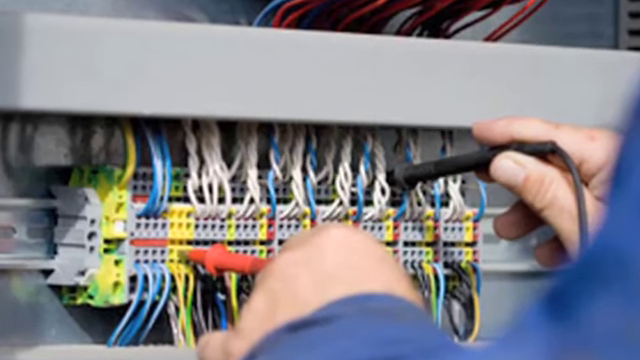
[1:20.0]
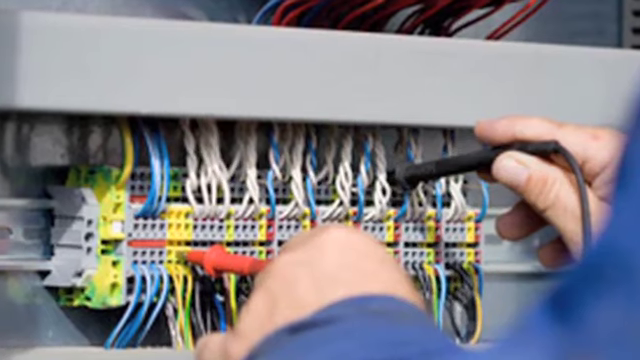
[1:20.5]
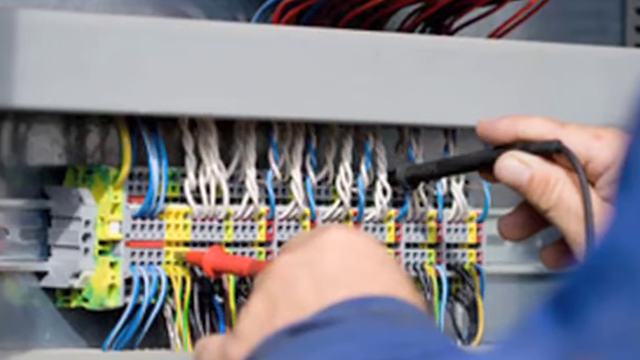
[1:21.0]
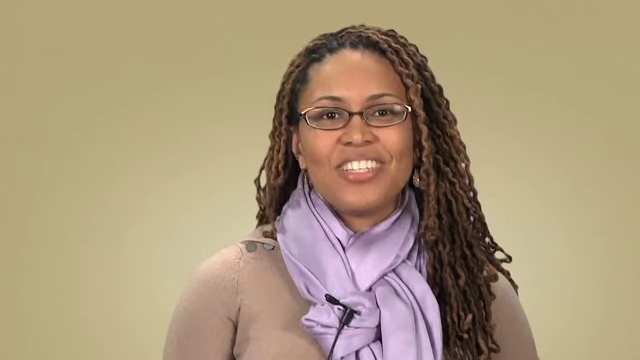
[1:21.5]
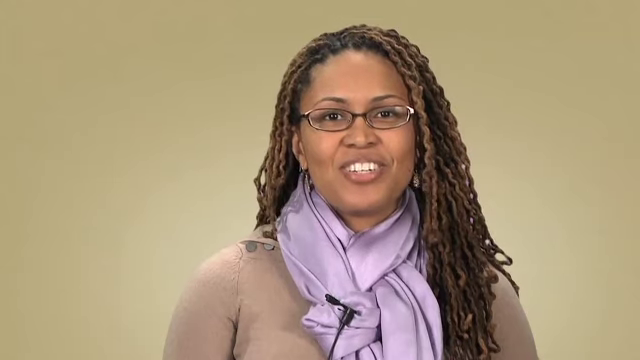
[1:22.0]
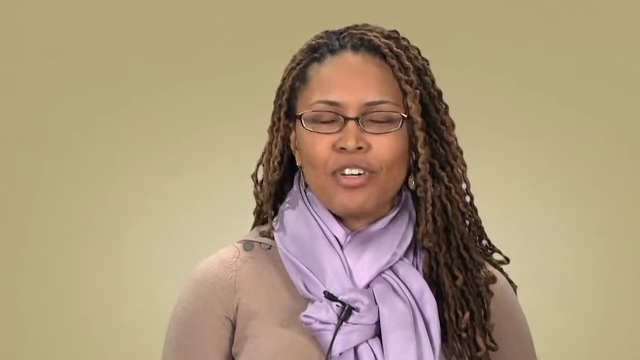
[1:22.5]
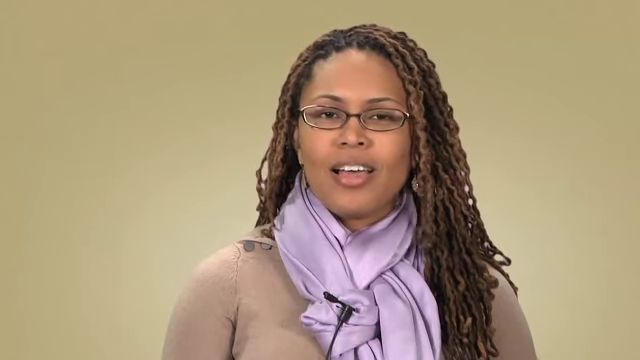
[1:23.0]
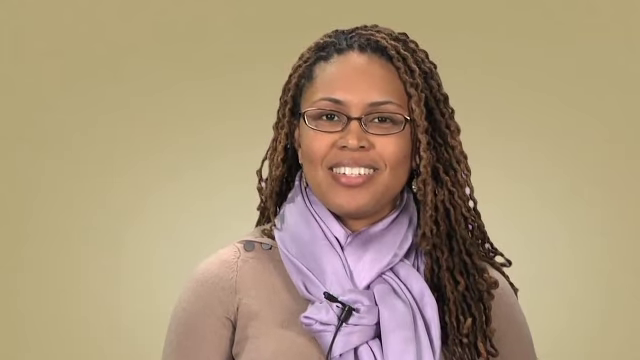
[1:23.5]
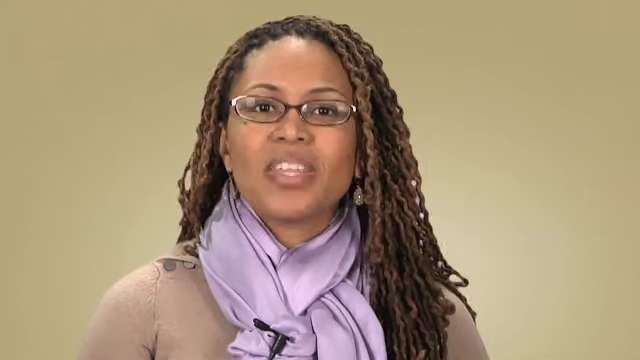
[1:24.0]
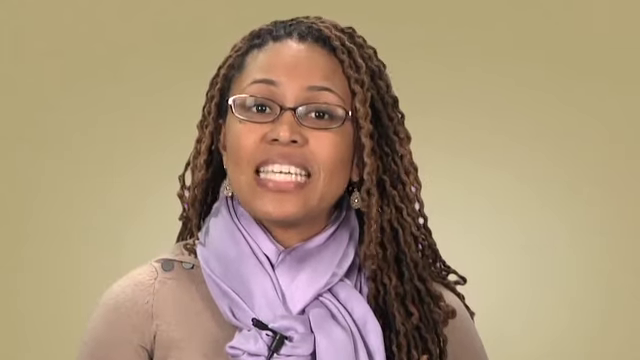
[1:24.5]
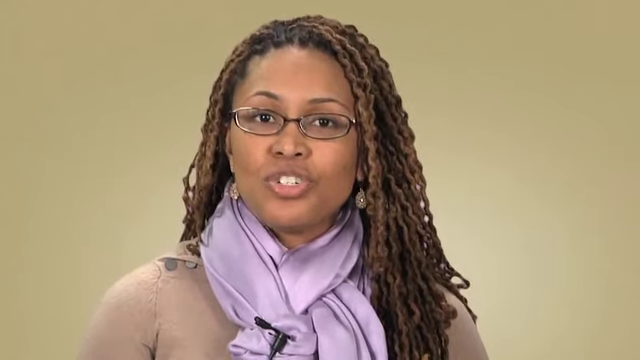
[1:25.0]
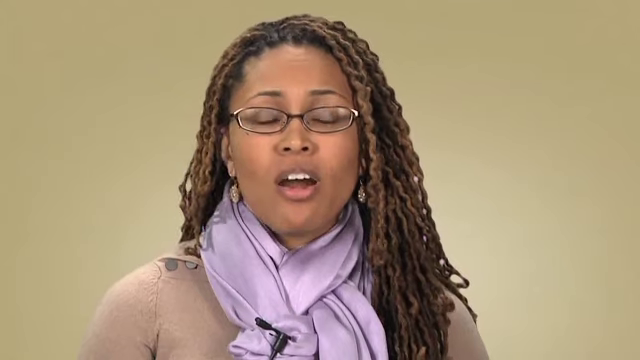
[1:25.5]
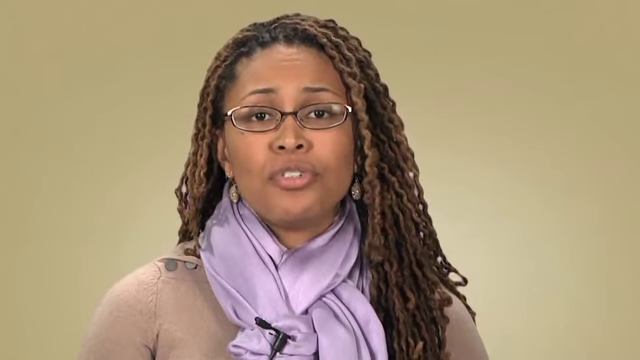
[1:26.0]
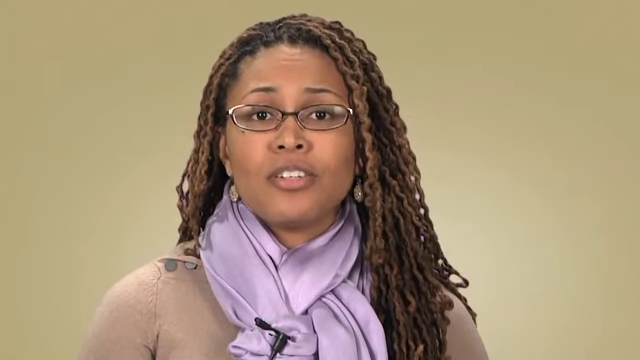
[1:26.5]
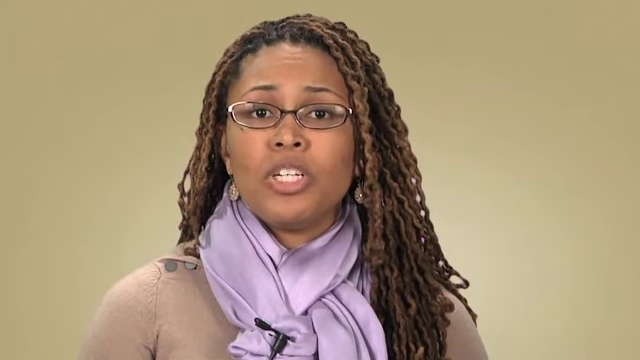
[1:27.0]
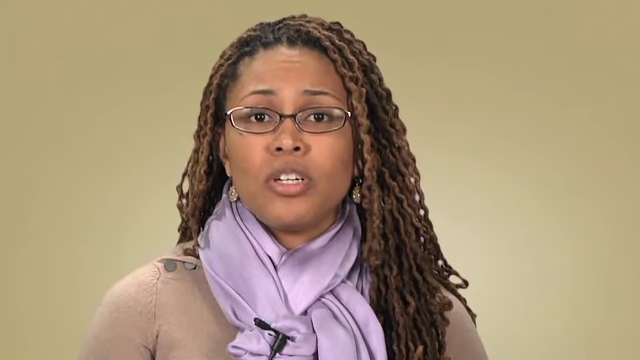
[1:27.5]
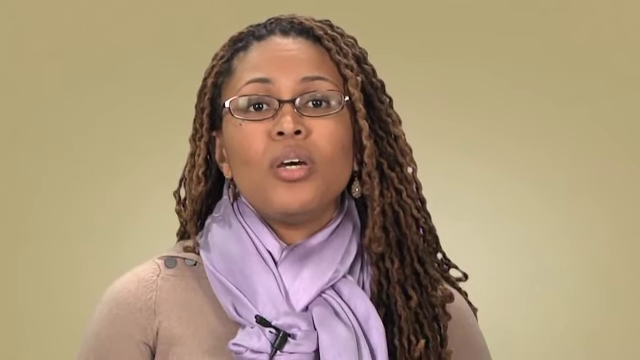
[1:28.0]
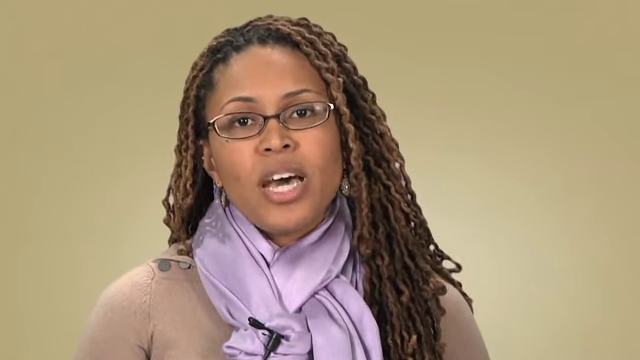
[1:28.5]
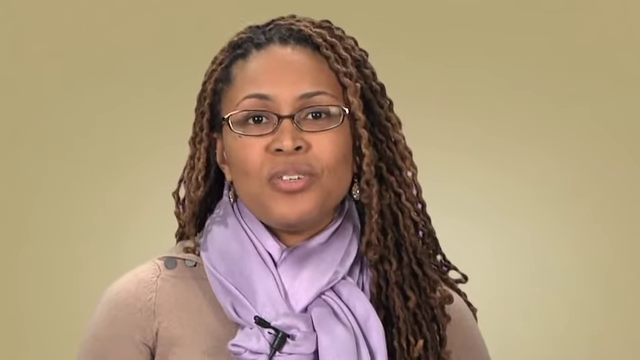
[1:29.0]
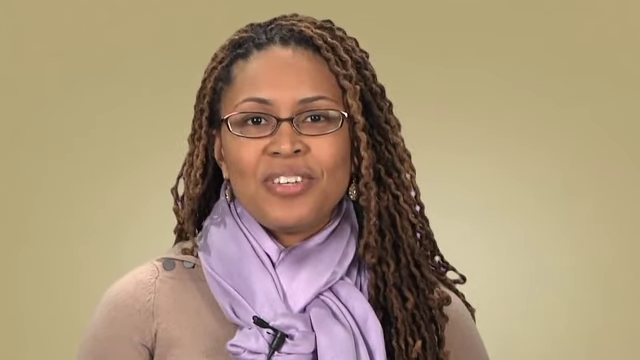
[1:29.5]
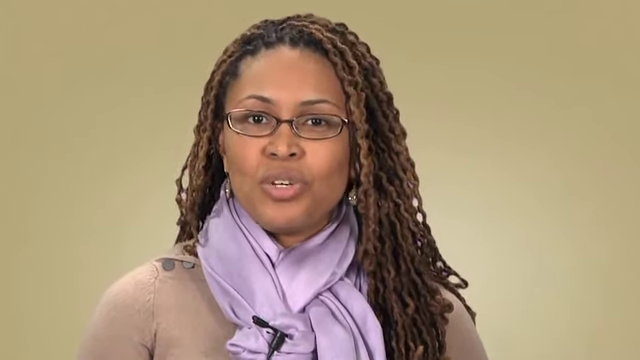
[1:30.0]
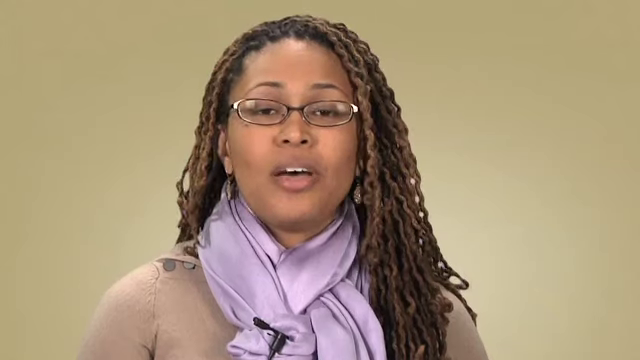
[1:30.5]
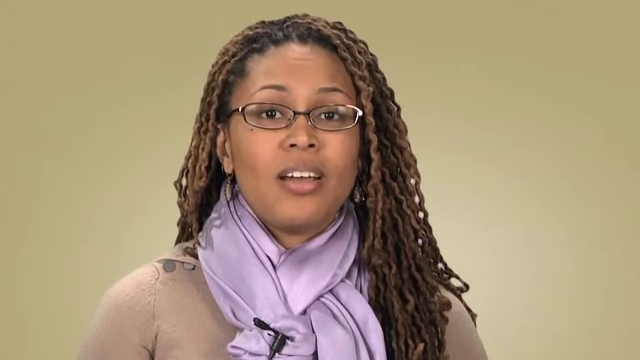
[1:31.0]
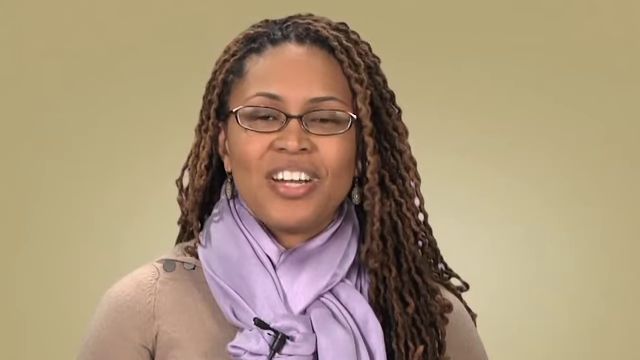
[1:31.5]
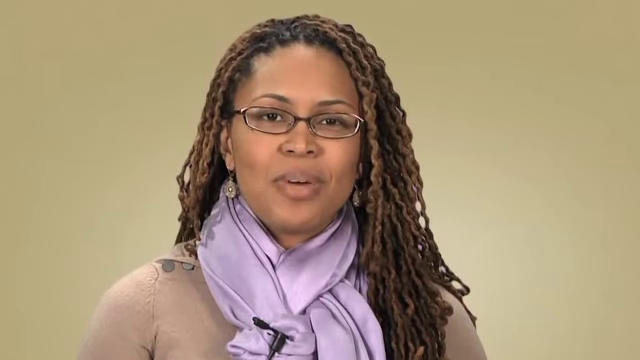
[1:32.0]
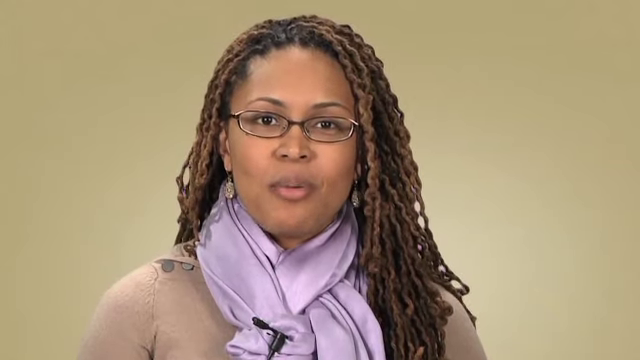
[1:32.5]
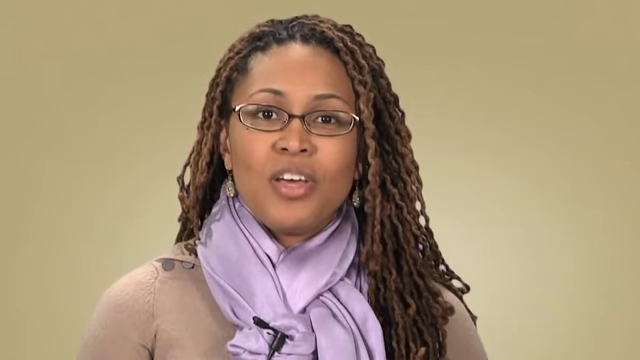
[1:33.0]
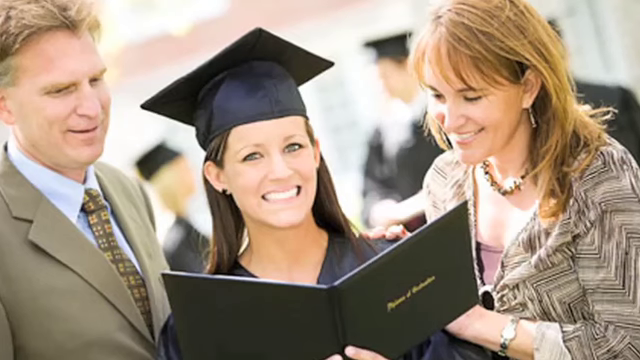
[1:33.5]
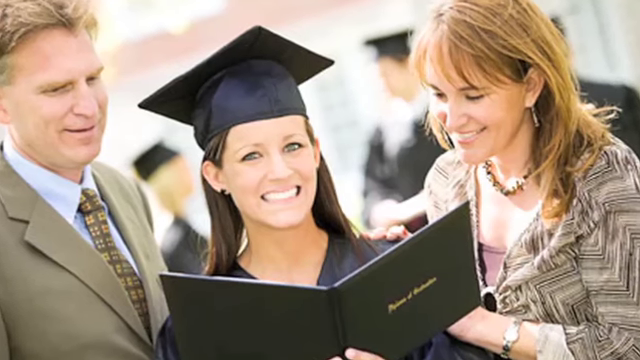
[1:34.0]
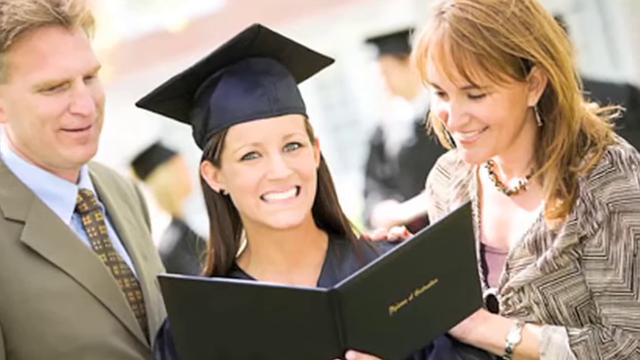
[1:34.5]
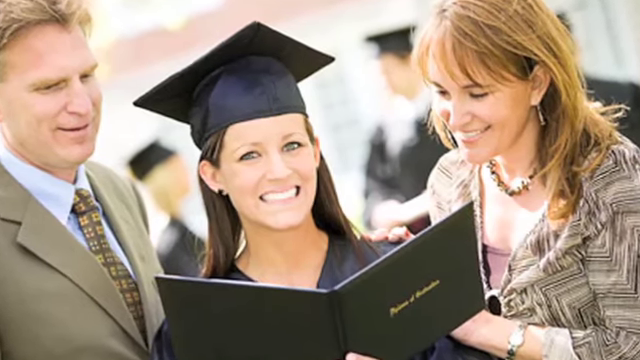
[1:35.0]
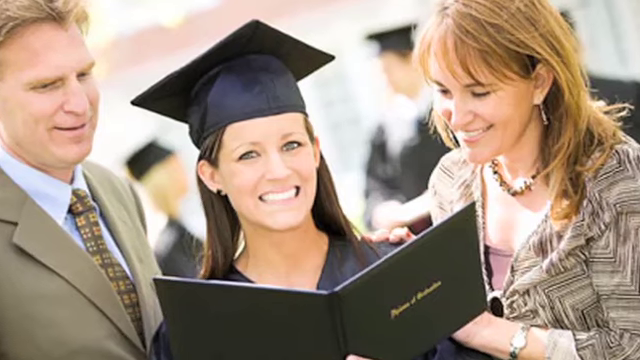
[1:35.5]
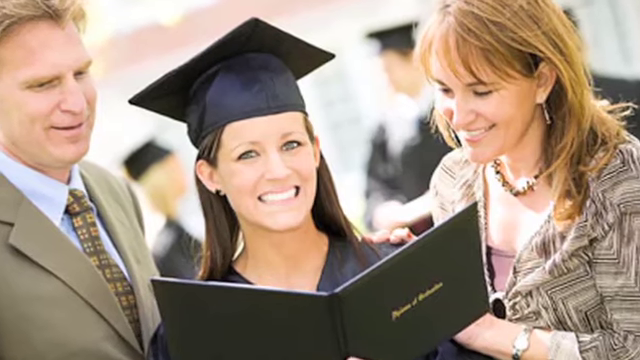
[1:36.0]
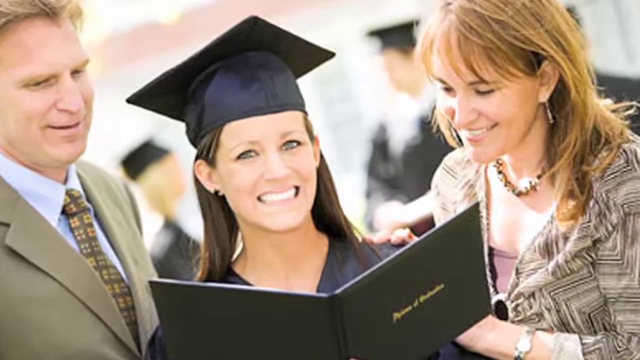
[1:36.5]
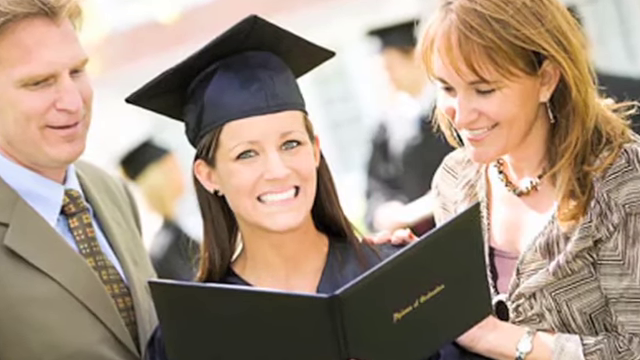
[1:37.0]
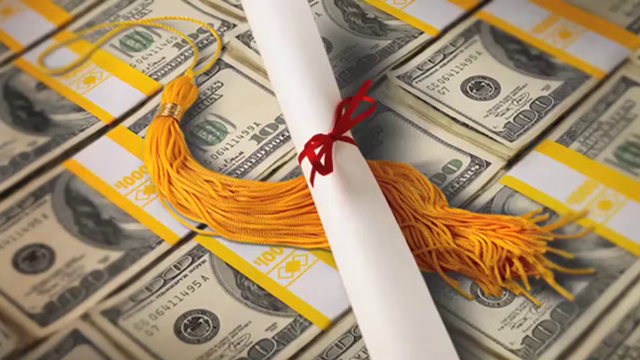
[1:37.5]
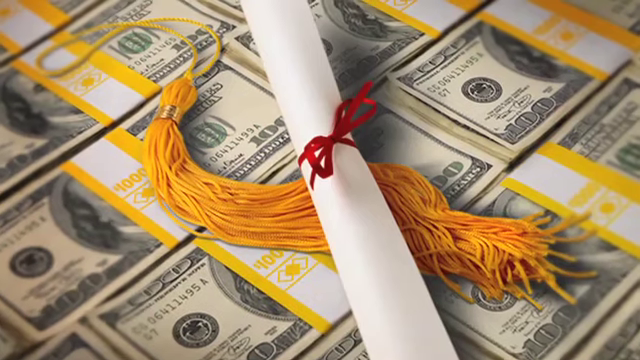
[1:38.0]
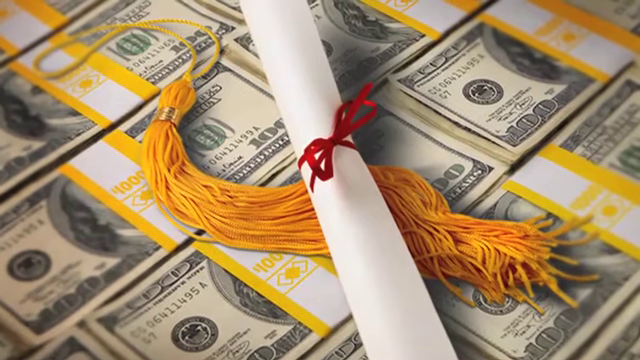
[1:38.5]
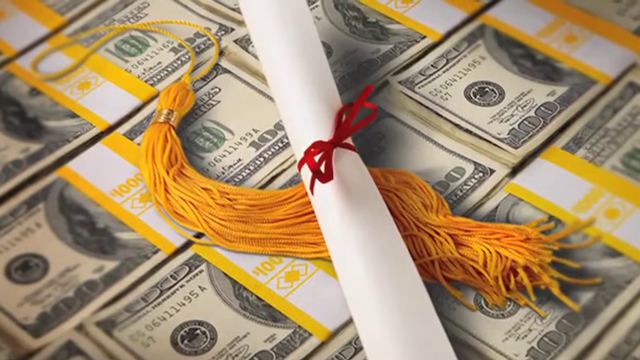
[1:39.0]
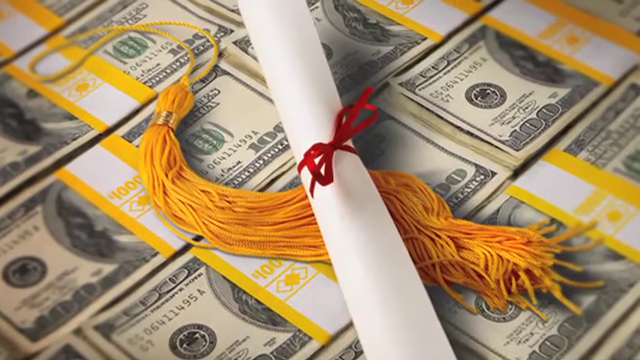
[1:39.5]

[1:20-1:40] Some type of patch panel, or maybe a phone line, is shown, and instruments are being used on it, possibly to test the voltages on the device. The video goes back to the African-American woman who has been speaking. She wears her glasses, a purple-looking scarf that looks like two or three scarves together, a brown sweater and earrings, and her braided hair goes past her shoulders as she continues talking. Next is a picture of a smiling Caucasian woman in a graduation gown and cap who appears to hold her graduation certificate in a binder or folder. Possibly her parents stand next to her: the man wears a blue suit jacket, a yellow and brown tie and a blue collared dress shirt, and what looks like her mom wears a multicolored gray shirt, a necklace and apparently a watch on her wrist. Then a diploma is shown on a stack of hundred-dollar bills.